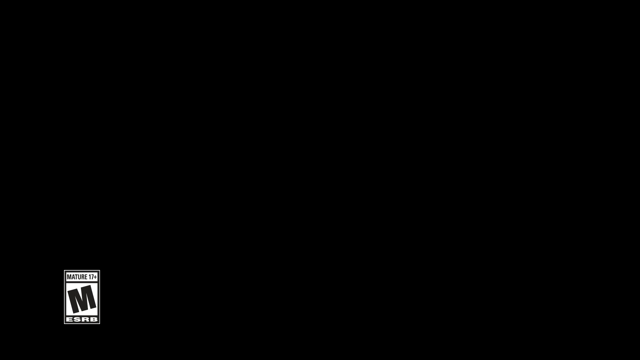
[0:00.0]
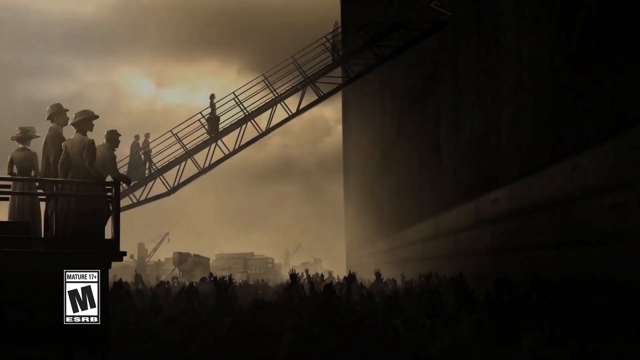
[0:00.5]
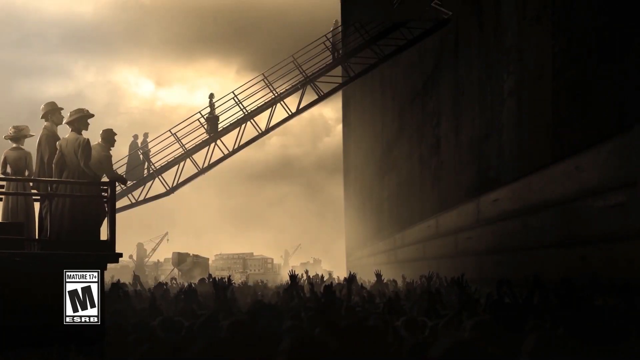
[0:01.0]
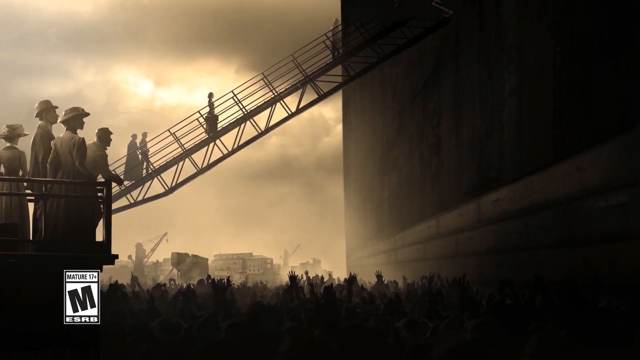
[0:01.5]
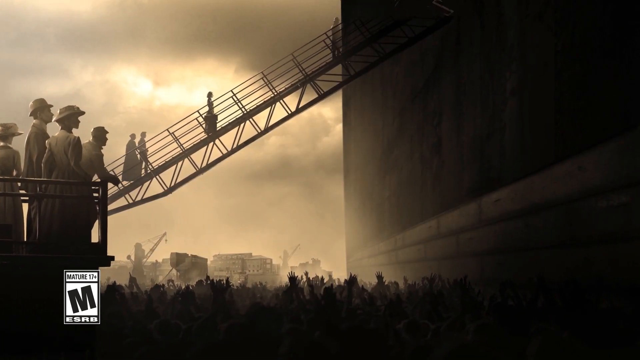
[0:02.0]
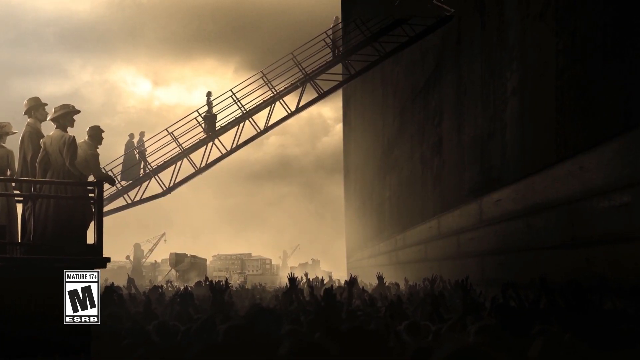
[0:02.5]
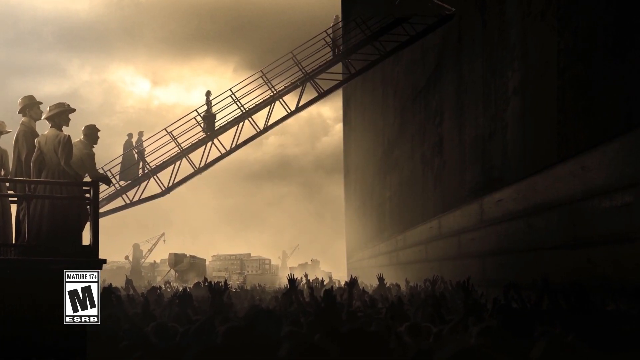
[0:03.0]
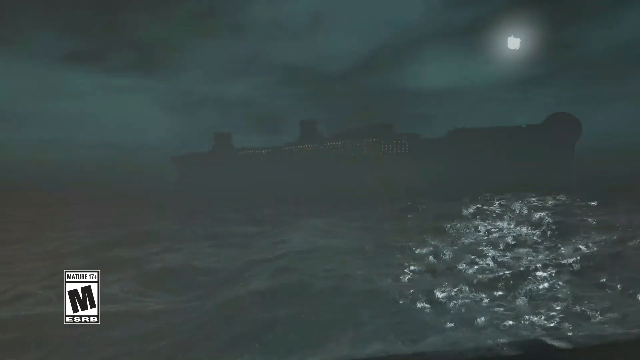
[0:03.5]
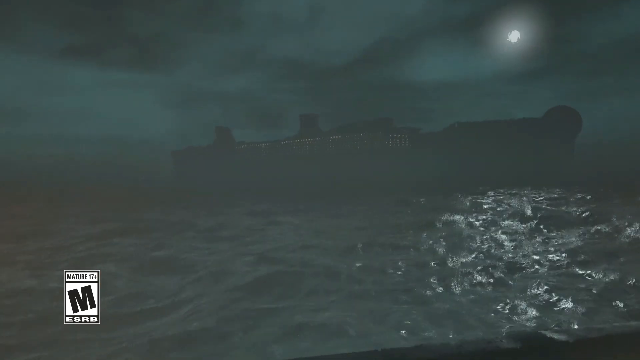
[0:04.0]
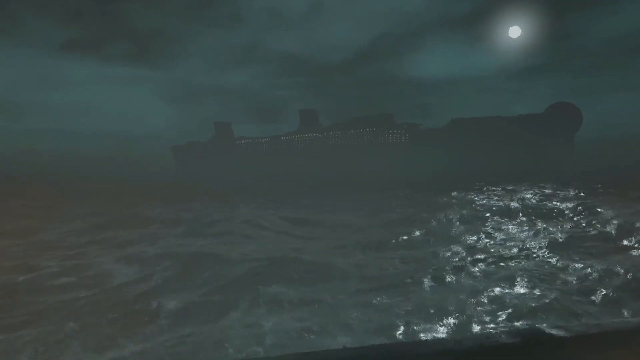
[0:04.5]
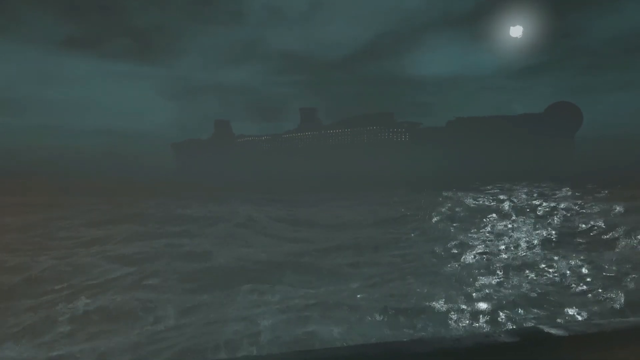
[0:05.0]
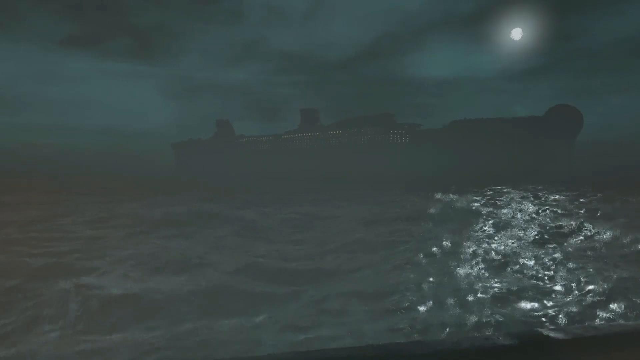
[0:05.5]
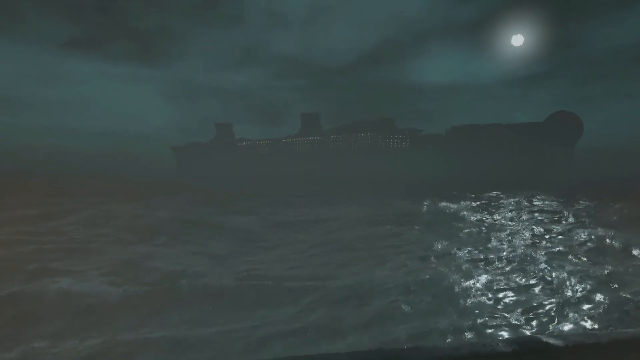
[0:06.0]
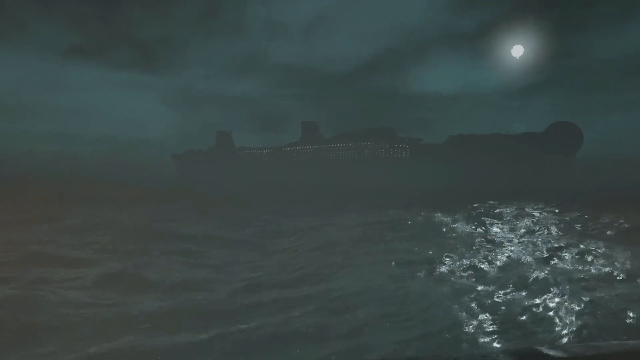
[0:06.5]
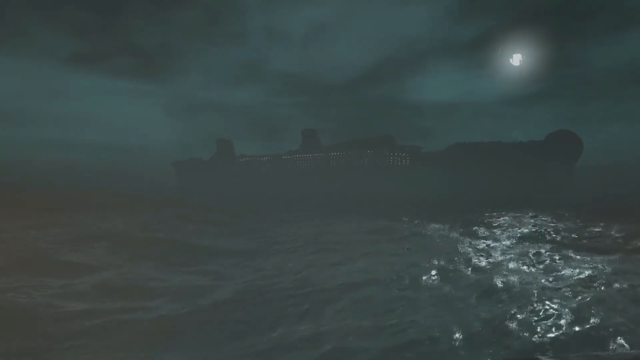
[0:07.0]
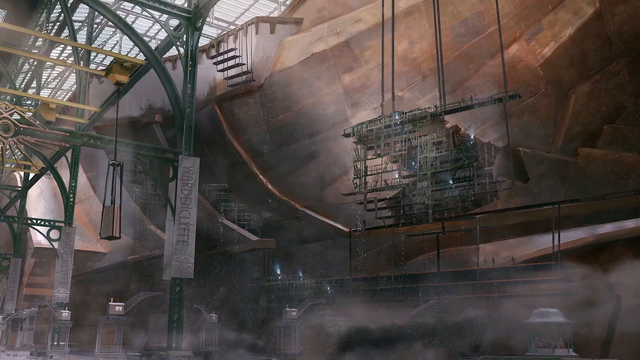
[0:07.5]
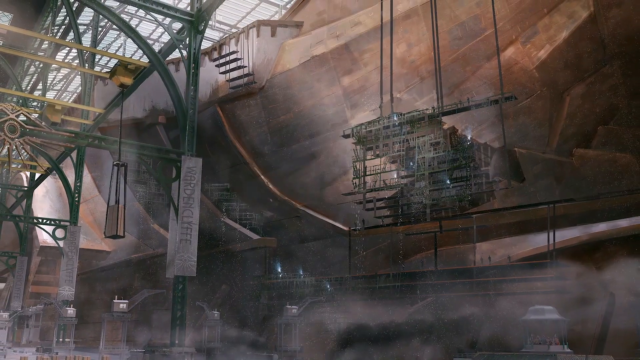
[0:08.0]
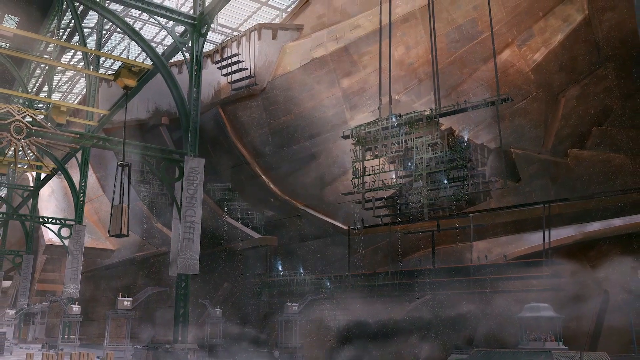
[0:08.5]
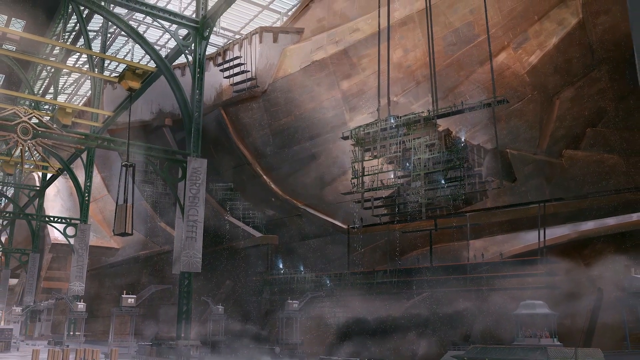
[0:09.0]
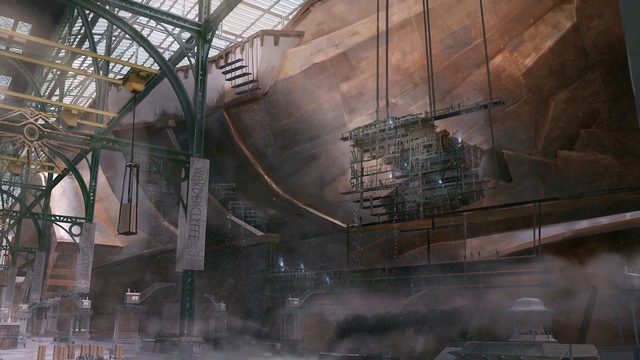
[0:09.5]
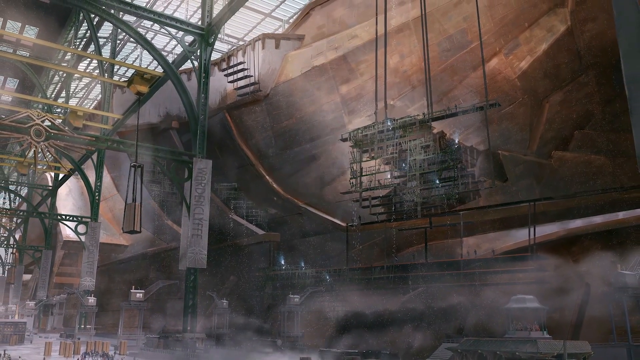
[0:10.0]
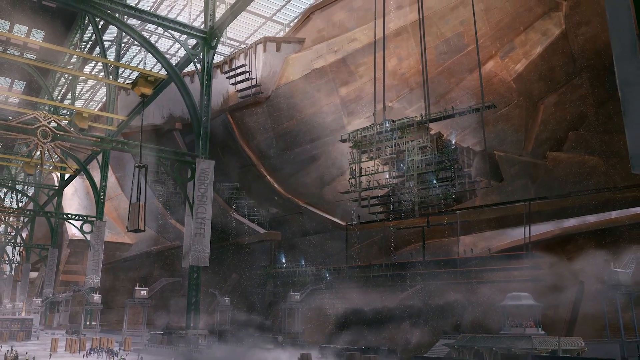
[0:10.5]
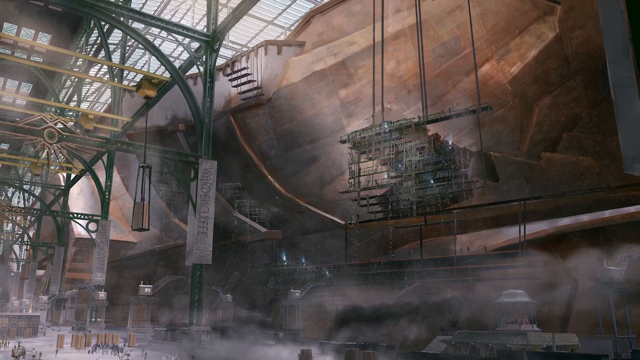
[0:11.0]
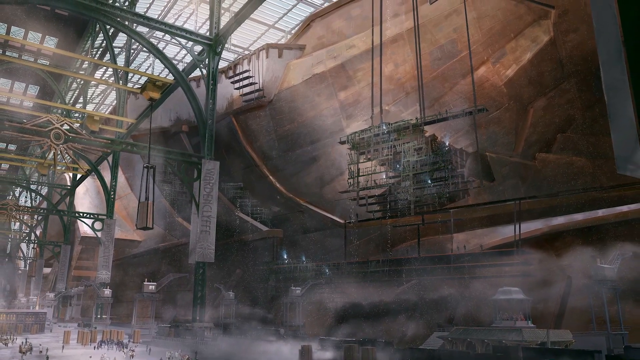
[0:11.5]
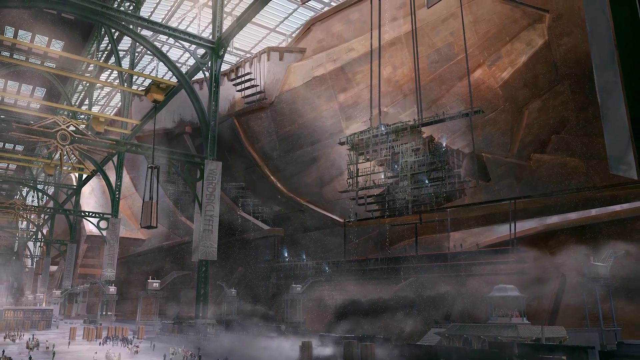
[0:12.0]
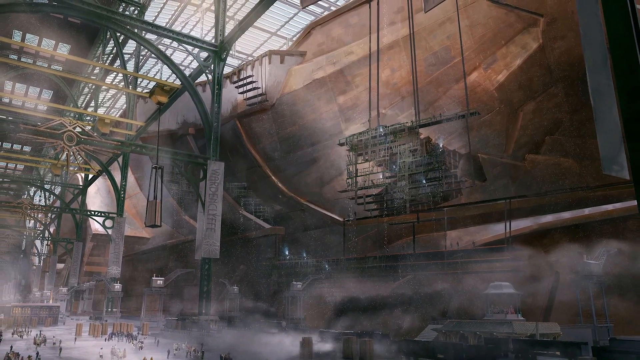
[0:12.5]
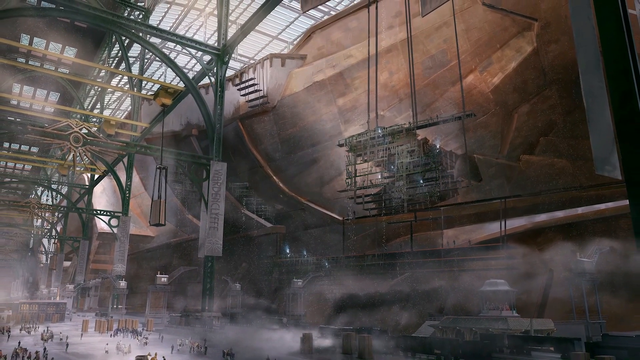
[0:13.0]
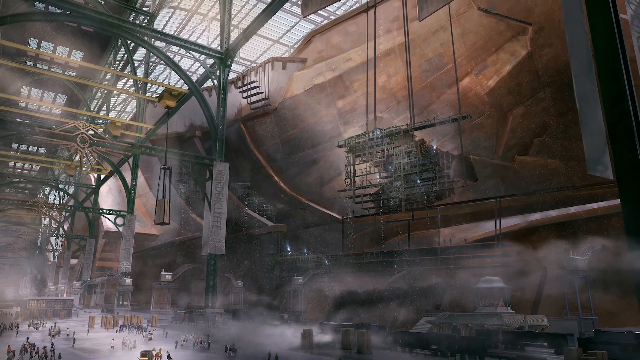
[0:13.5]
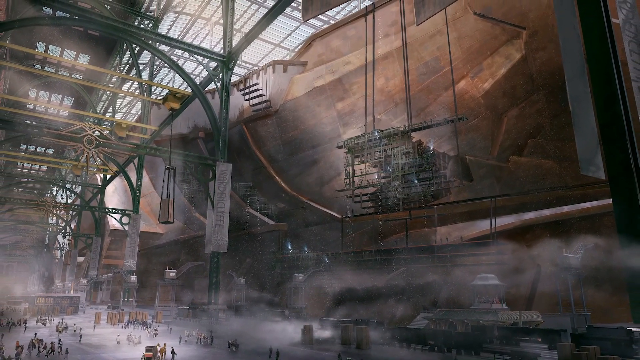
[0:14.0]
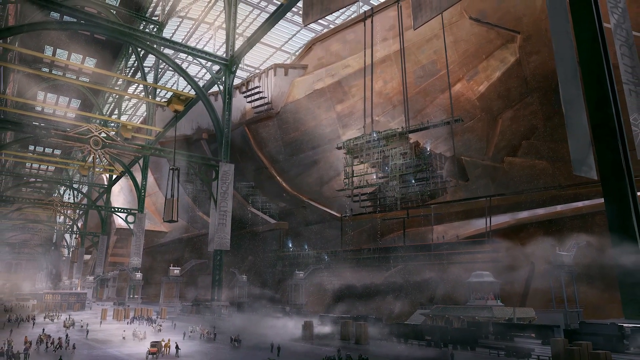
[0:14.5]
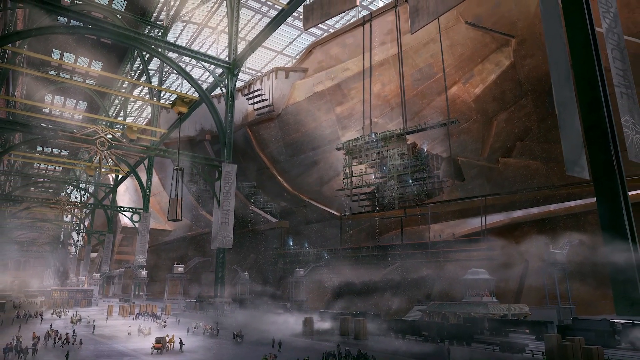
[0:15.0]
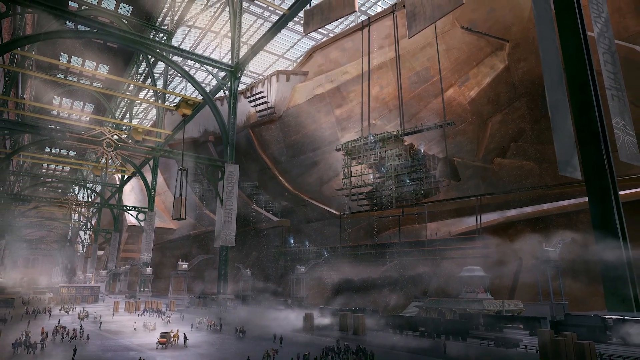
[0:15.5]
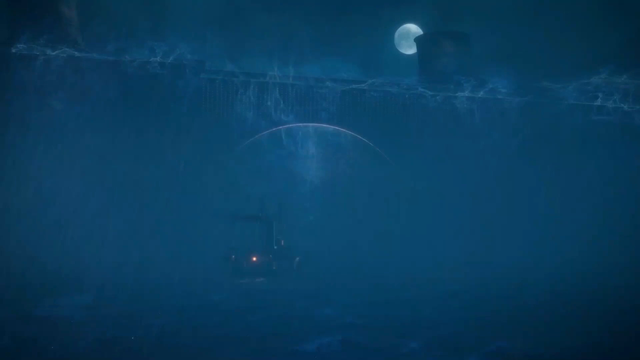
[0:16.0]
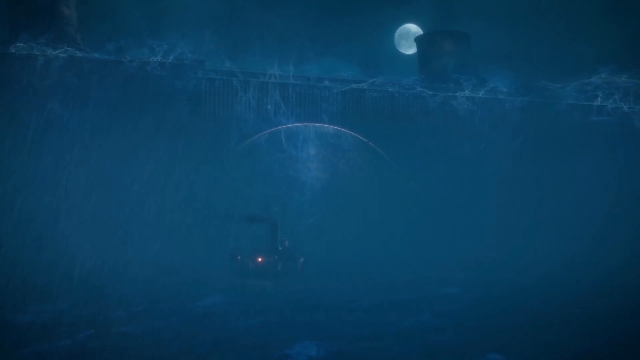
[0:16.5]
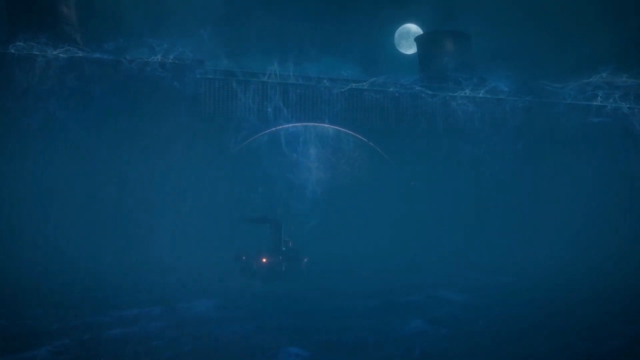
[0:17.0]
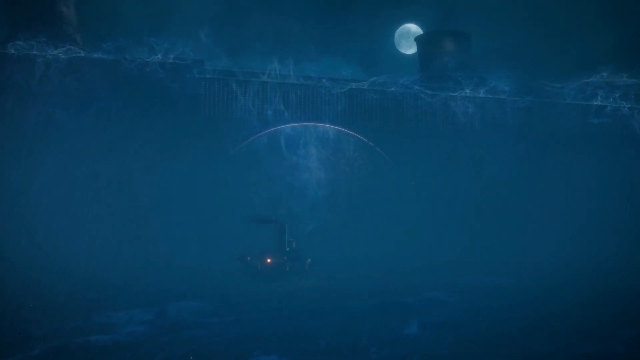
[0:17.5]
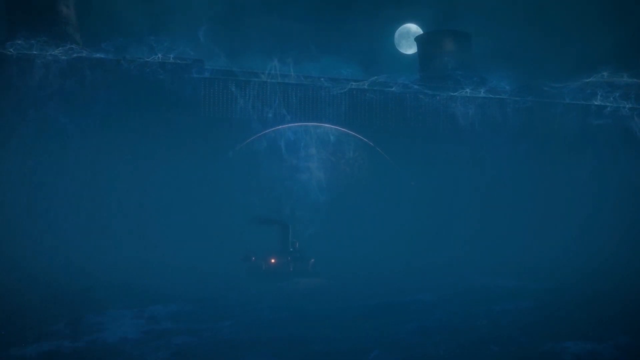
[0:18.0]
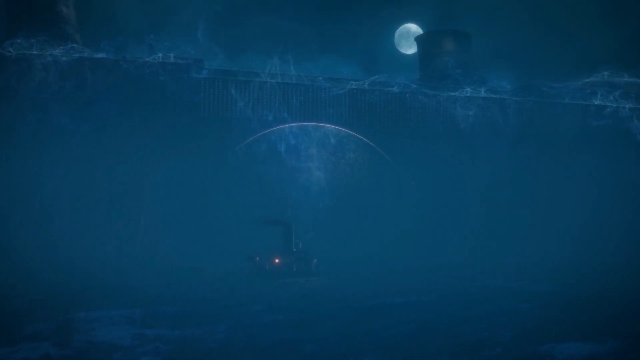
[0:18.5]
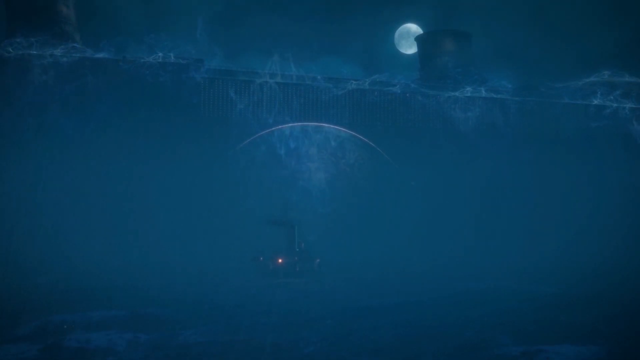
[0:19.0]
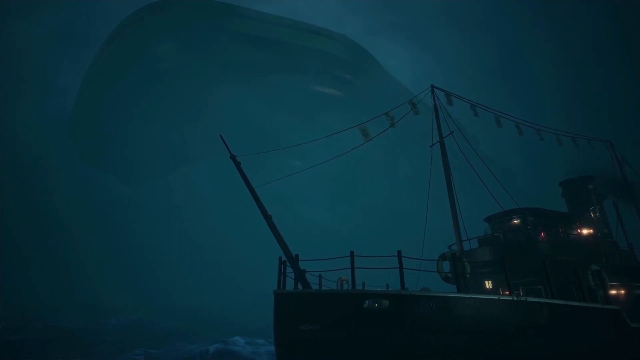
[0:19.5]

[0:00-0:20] The video opens on a black screen and appears to be some type of video game. It then switches to what might be a really big ship, with a ladder going up and people walking up on it. In the bottom left is a logo that says "mature 17 plus" with an M, and the whole scene has a coppery gray color. There appears to be a crowd of people. The scene then switches to a really large, cruise-ship-style boat out on the ocean; it is dark out, the moon is visible in the background, and the water is pretty calm. Next comes what looks to be the inside of the ship, which is very industrial looking, with all kinds of metal rails. The view then switches back outside, where it is very cloudy, making it hard to see what is going on.